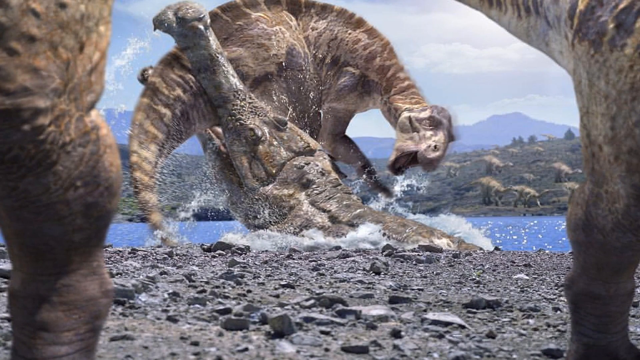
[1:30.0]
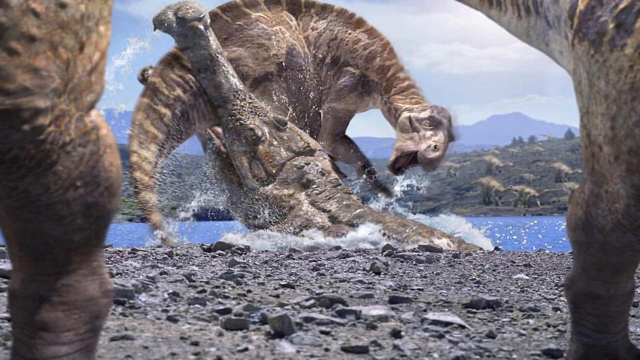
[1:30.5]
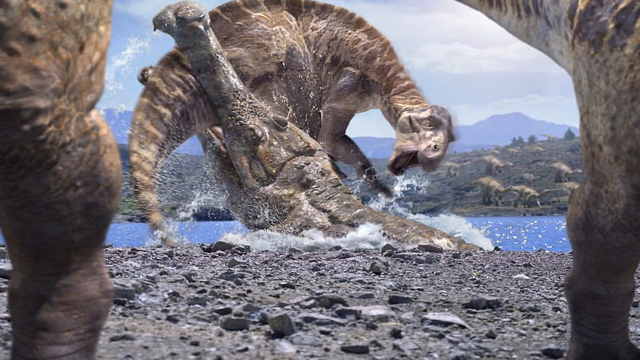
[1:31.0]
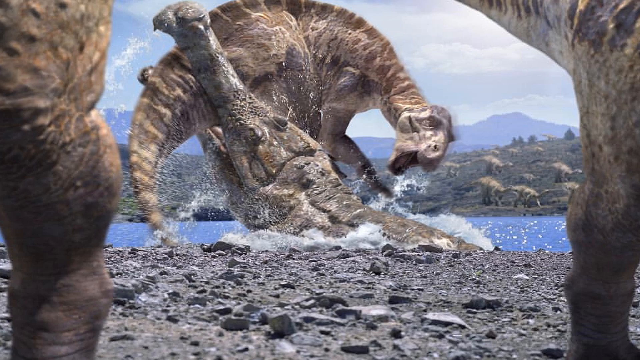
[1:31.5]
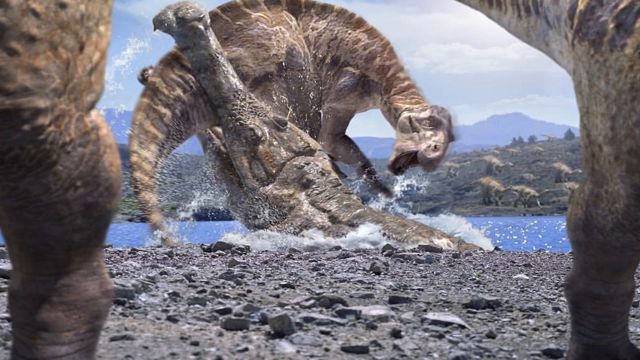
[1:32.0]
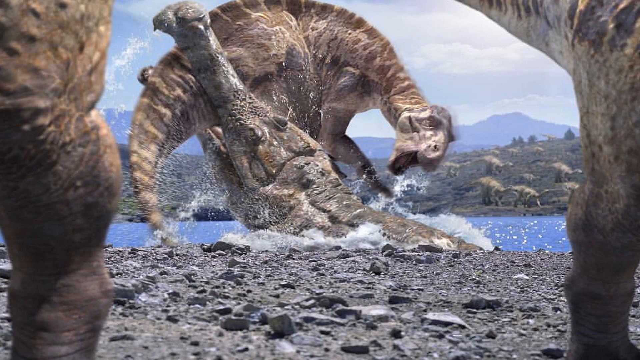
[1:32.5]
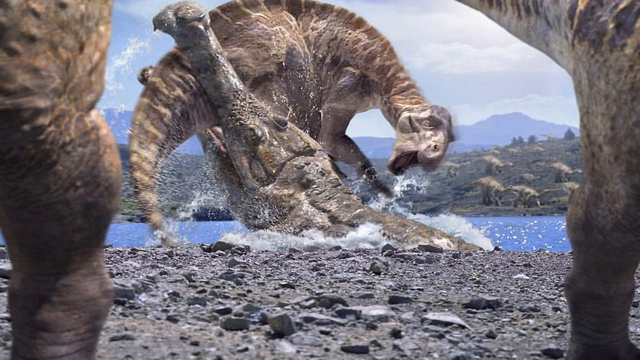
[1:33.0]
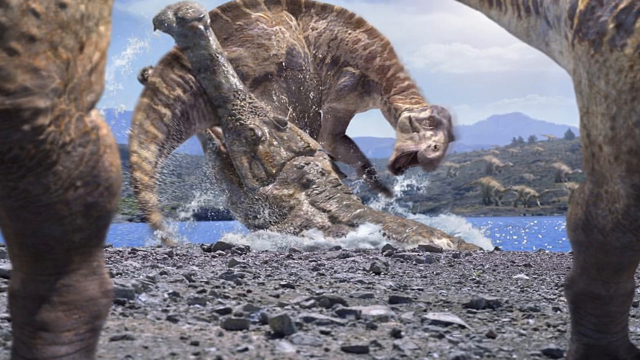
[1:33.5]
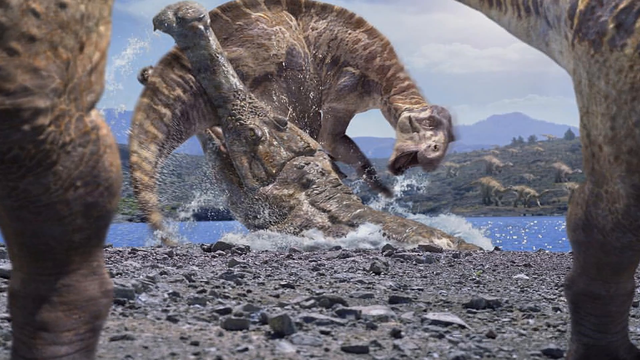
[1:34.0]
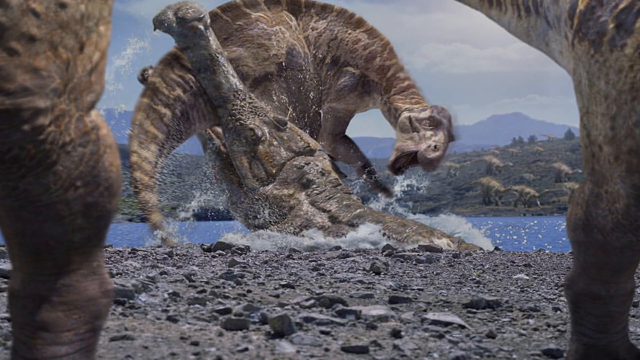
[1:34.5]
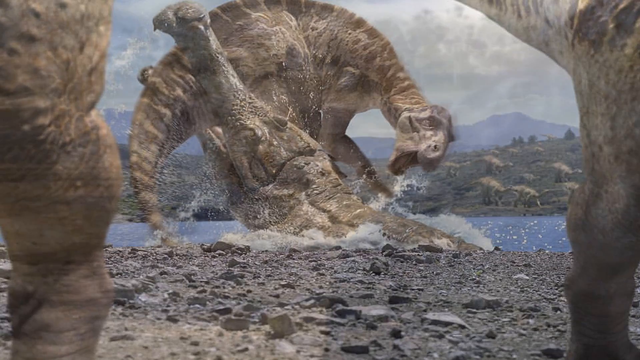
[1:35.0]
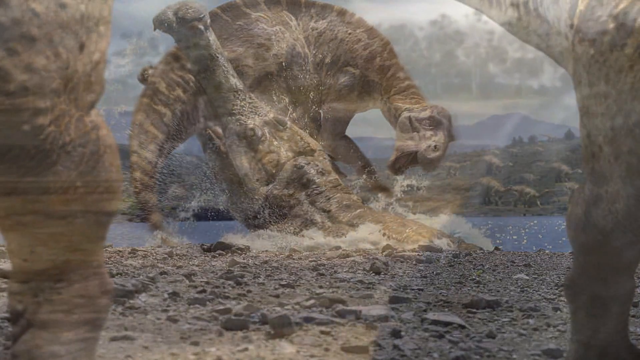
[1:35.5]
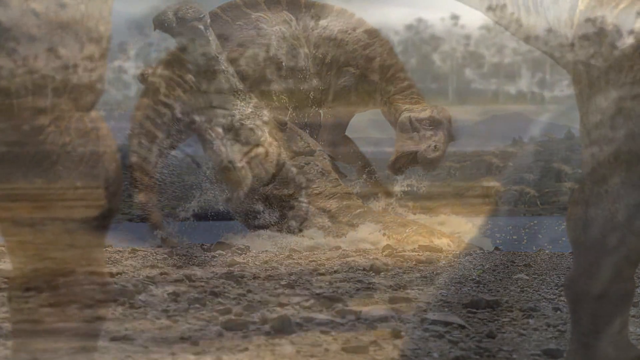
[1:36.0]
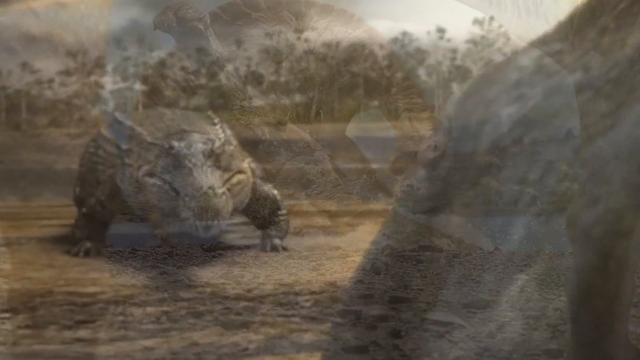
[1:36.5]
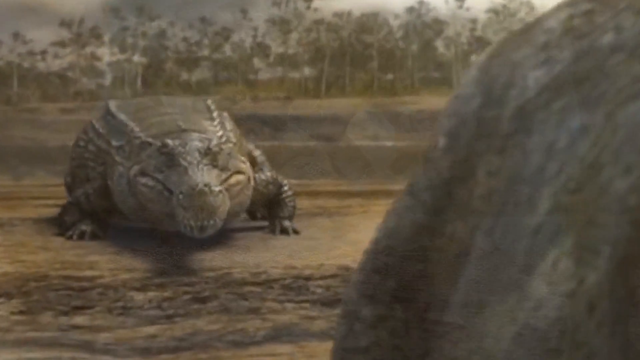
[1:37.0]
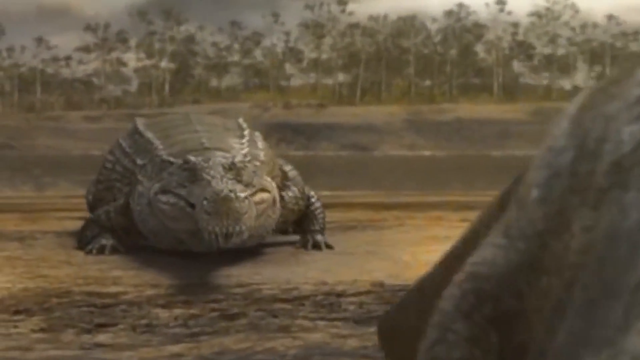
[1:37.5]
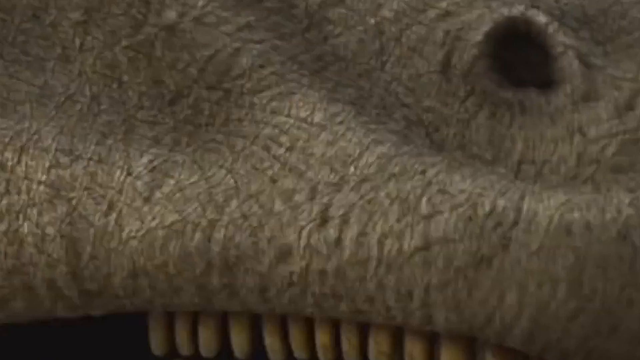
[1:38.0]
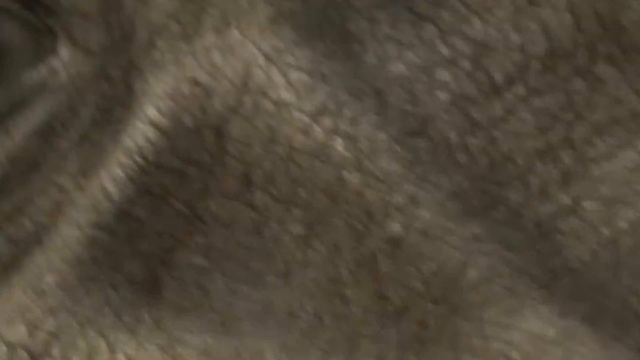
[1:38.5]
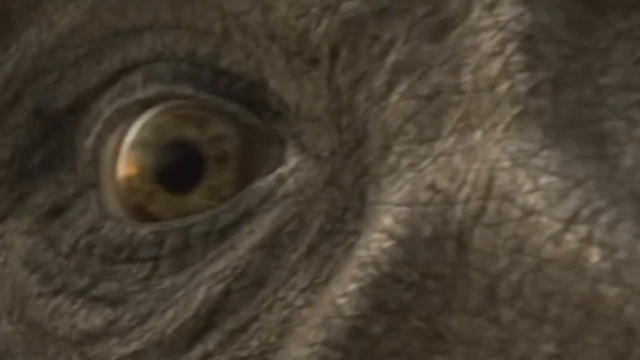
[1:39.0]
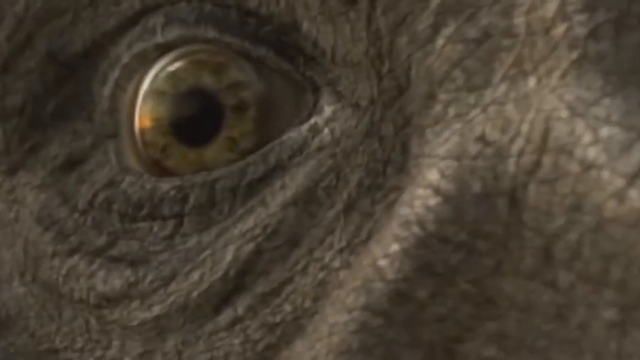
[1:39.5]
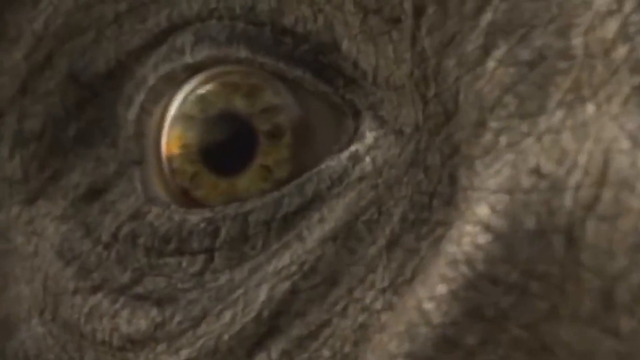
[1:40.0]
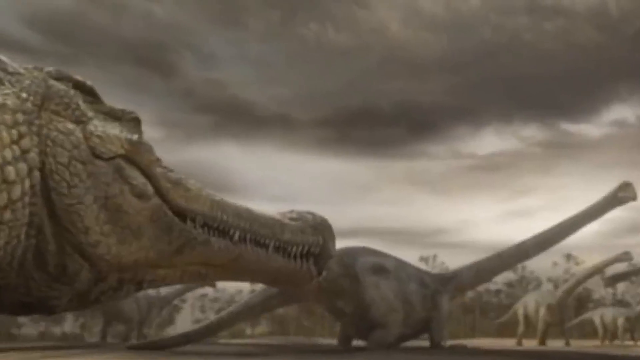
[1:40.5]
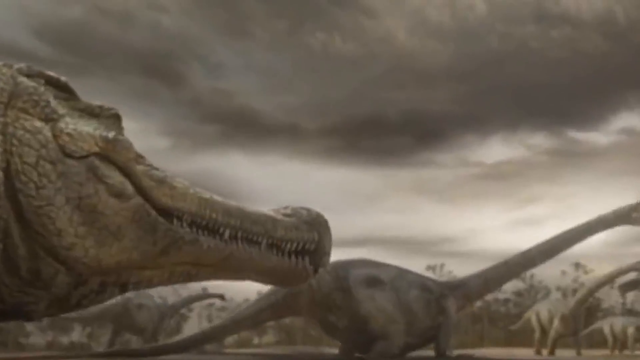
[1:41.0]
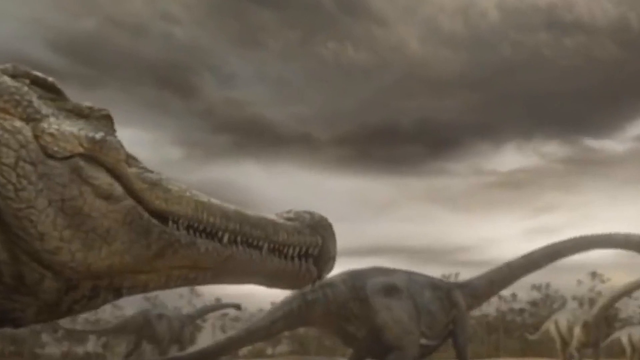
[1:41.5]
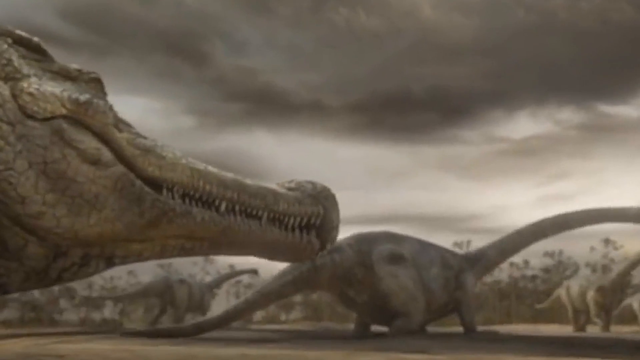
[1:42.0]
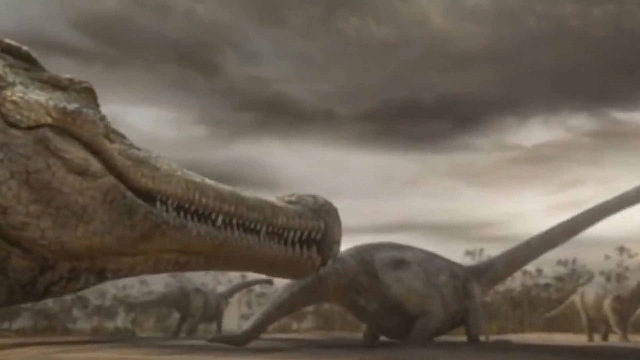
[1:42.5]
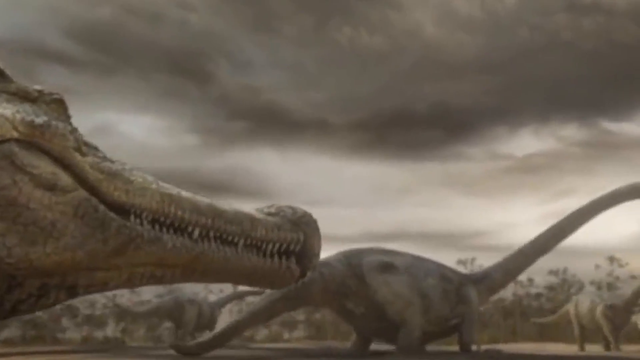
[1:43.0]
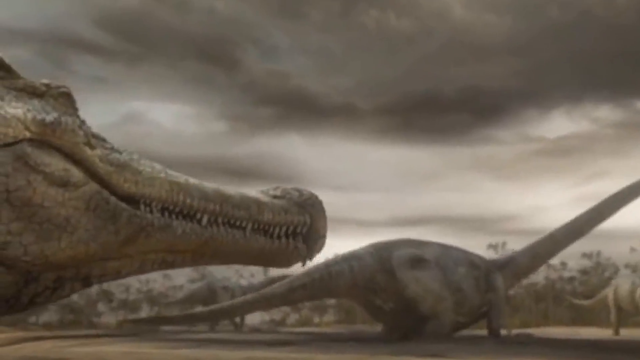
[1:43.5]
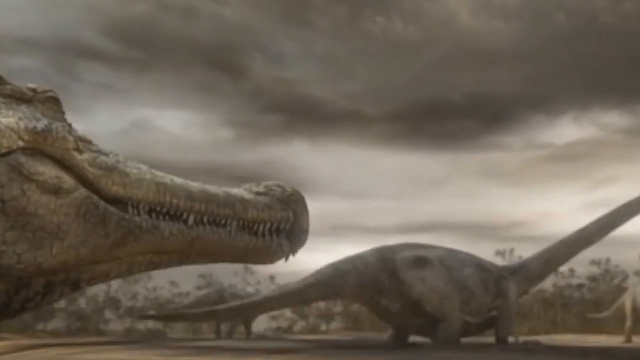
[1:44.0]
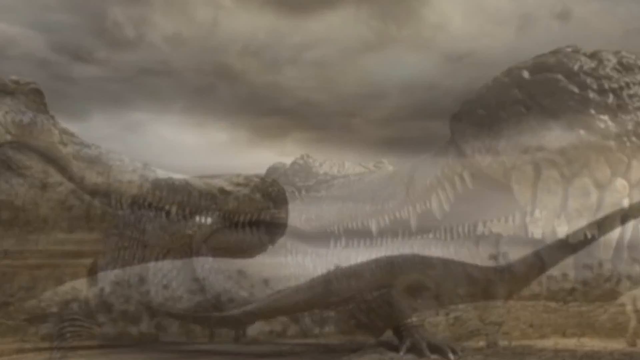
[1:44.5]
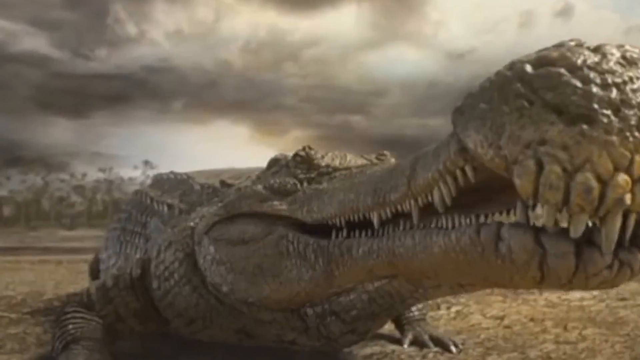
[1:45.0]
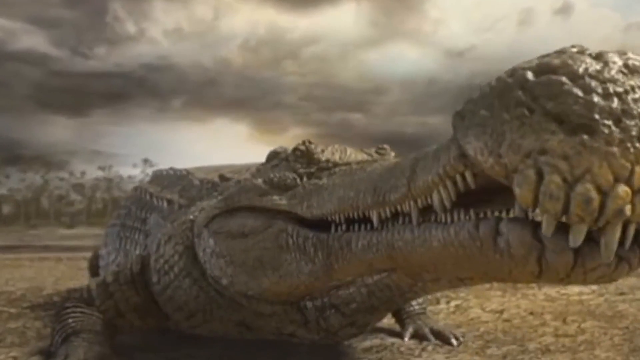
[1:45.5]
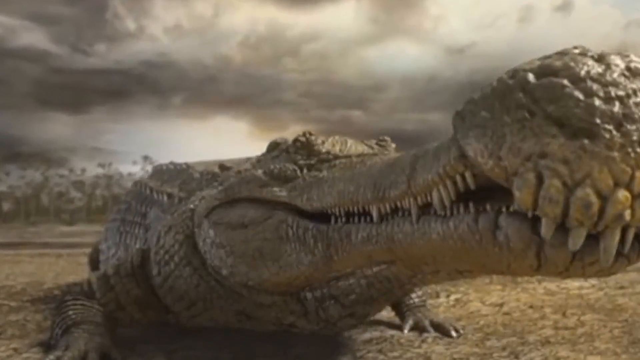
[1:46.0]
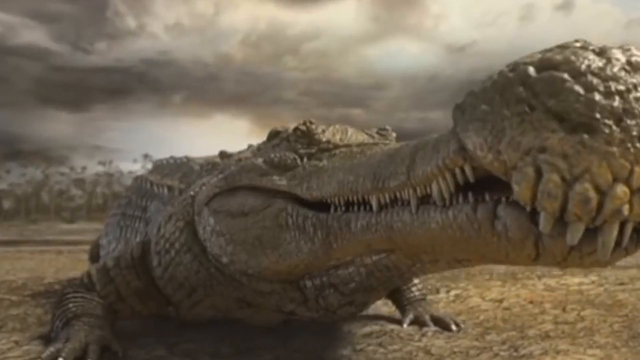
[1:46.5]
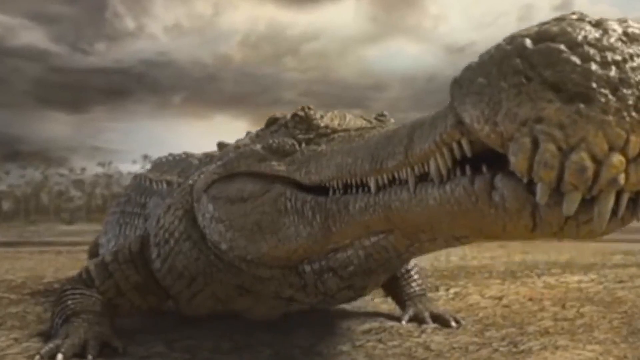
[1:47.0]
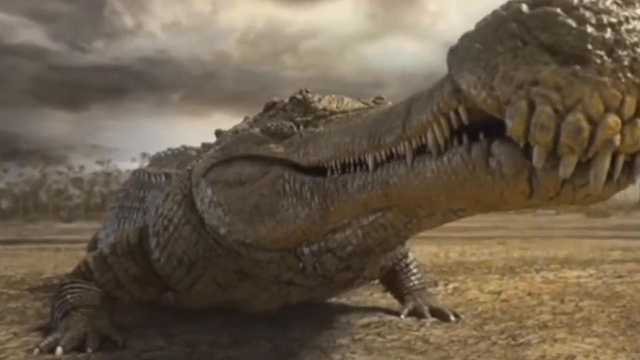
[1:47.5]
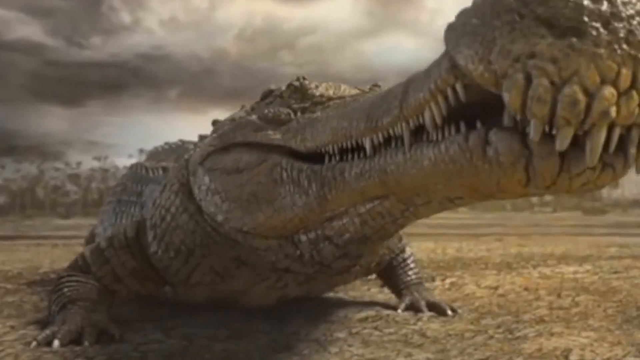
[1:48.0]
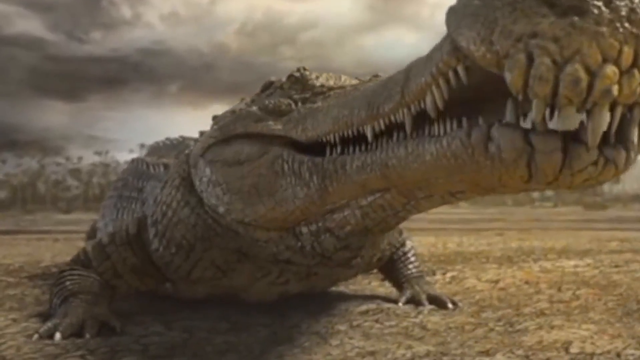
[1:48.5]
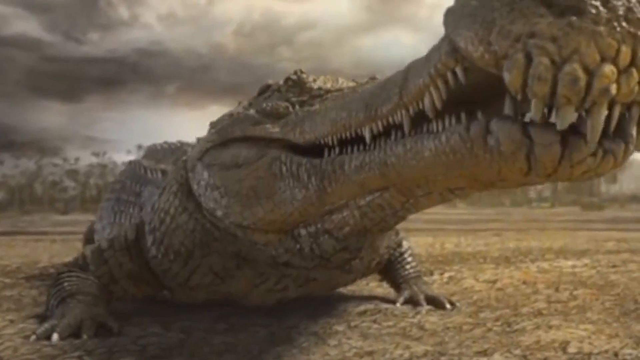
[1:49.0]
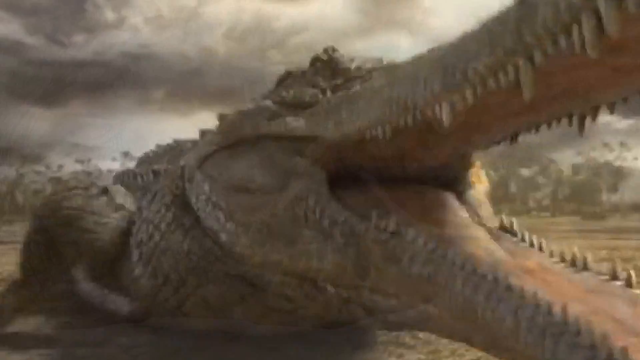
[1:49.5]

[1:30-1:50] The still image of the crocodile coming up out of the water and latching onto the dinosaur gives way to video with the crocodile on the left side of the frame. It appears to be stepping into place, watching a dinosaur, and settles down on its legs as if watching it. A very close view, apparently of the dinosaur's eye, shows the eyeball, the eye opening and the bone structure around it; the eye is very wide, the pupil is open very wide and looks very alarmed, and it moves in small movements. The view then looks over the crocodile's shoulder, showing its head and the long-tailed, long-necked dinosaur in front of it that it is watching. The dinosaur's right leg appears to be moving back and forth as if in quicksand or a mud puddle, and its left leg is perhaps stuck. The view returns to the crocodile, which appears to be watching the dinosaur; it slowly raises itself up on its legs, opens its mouth and strikes.